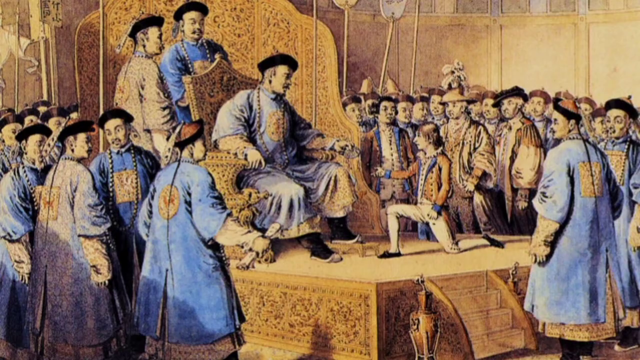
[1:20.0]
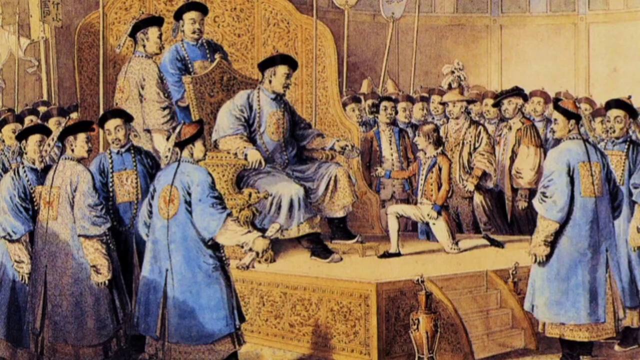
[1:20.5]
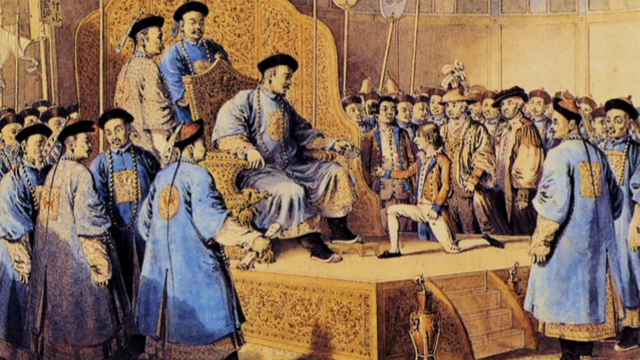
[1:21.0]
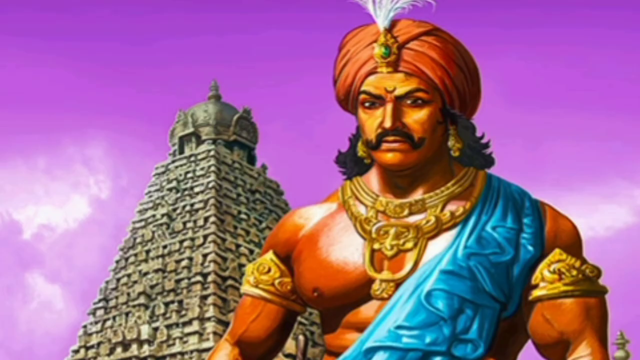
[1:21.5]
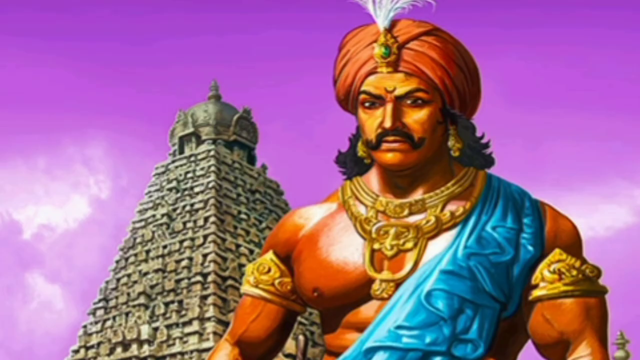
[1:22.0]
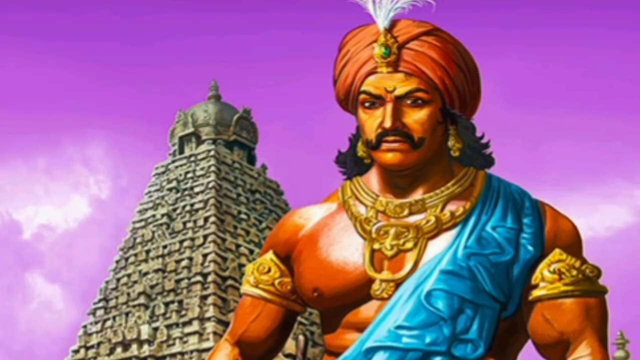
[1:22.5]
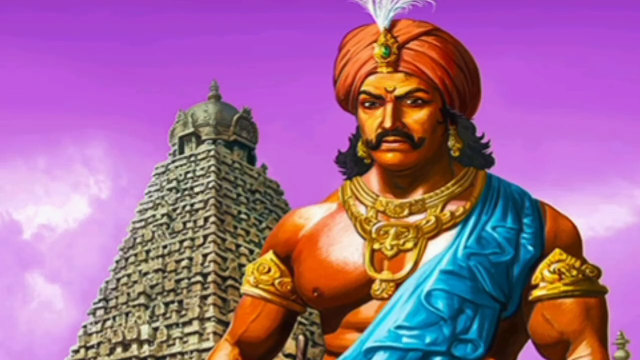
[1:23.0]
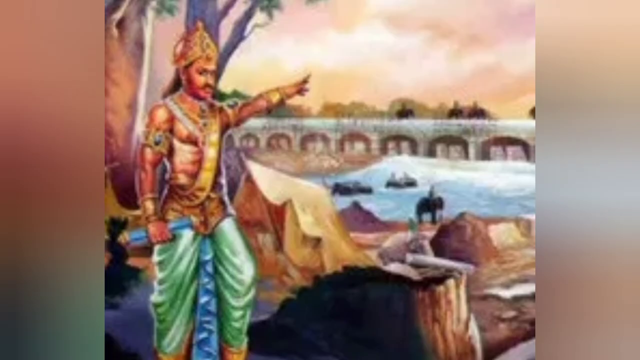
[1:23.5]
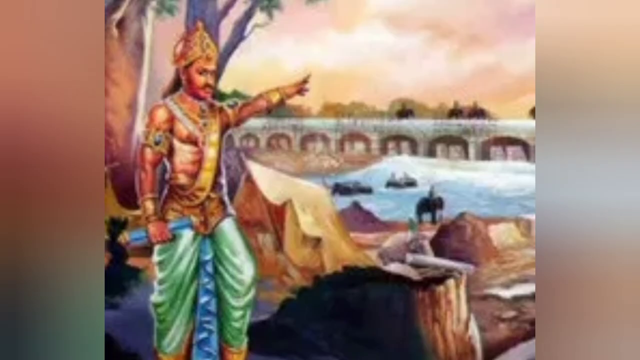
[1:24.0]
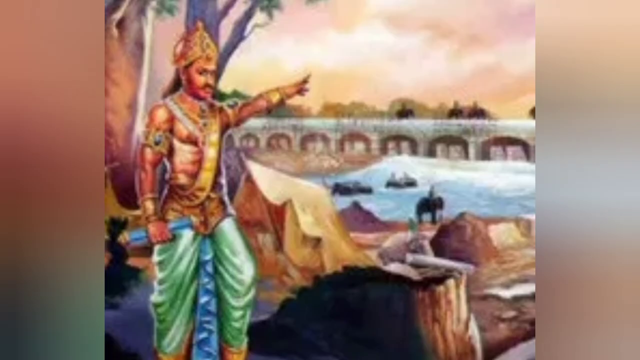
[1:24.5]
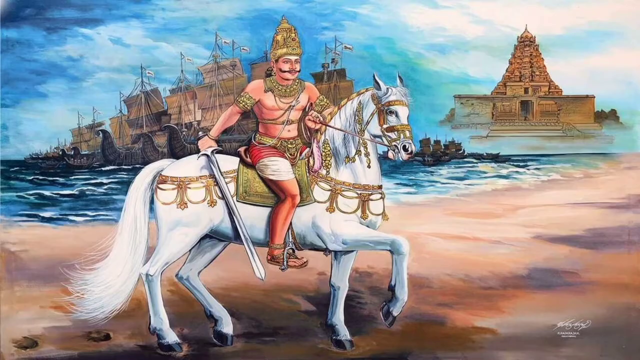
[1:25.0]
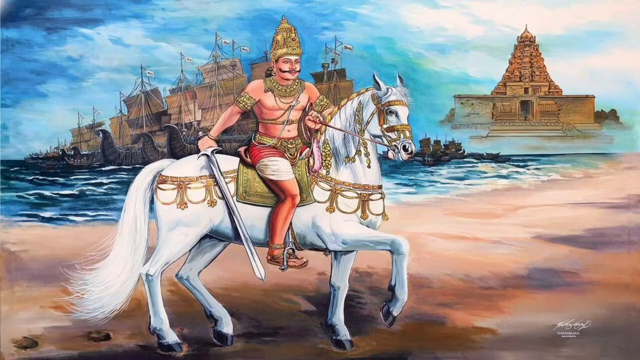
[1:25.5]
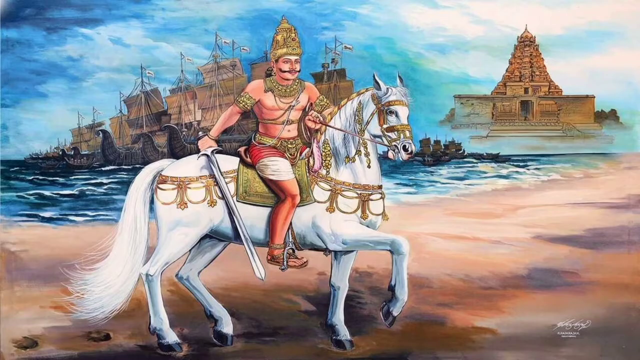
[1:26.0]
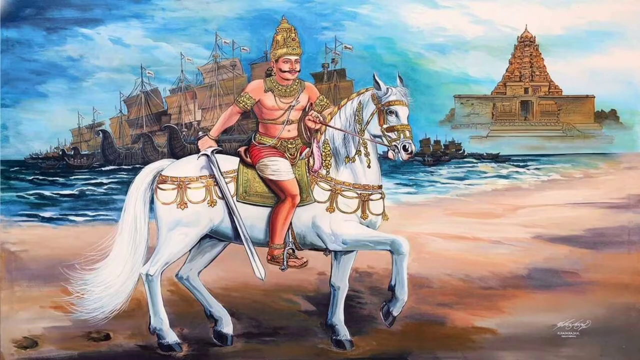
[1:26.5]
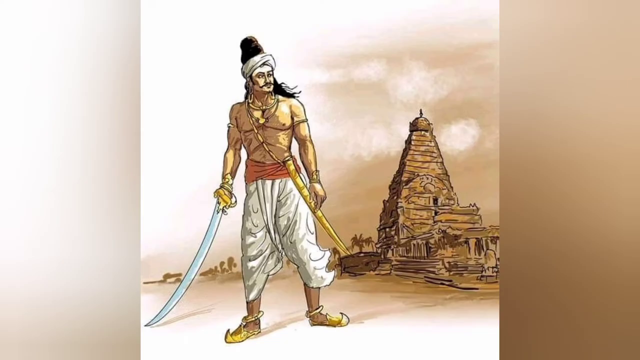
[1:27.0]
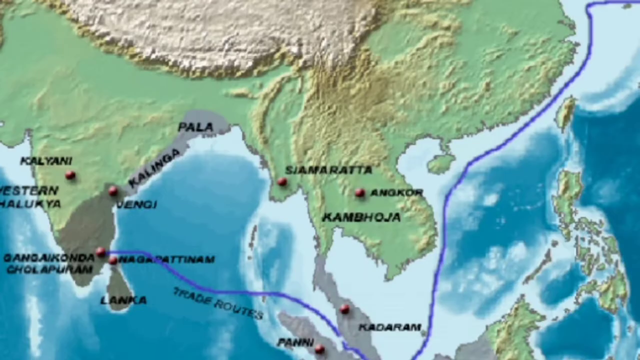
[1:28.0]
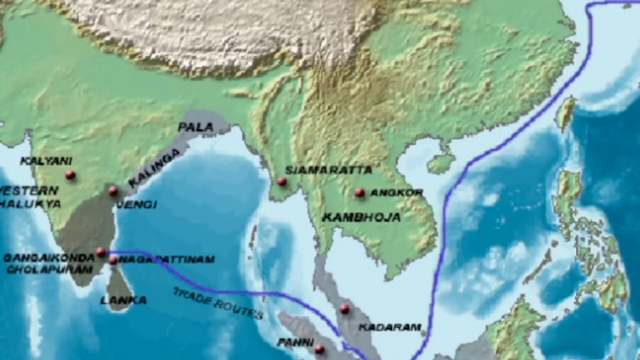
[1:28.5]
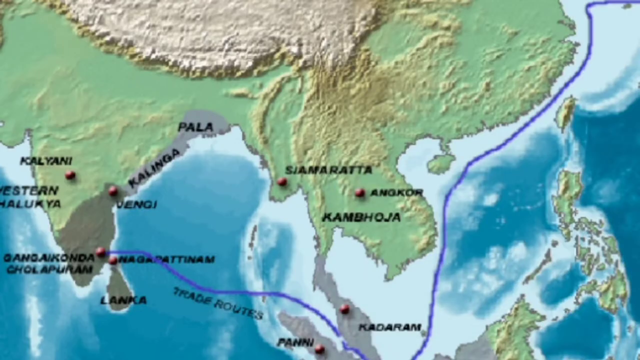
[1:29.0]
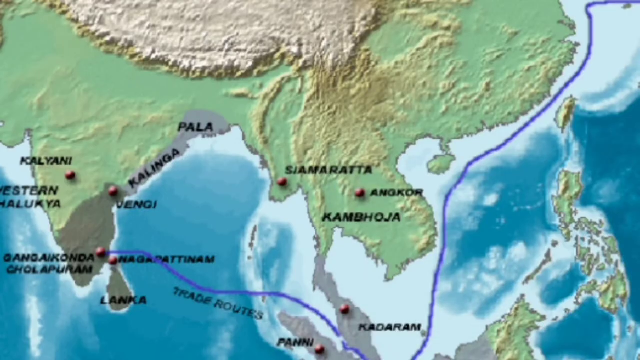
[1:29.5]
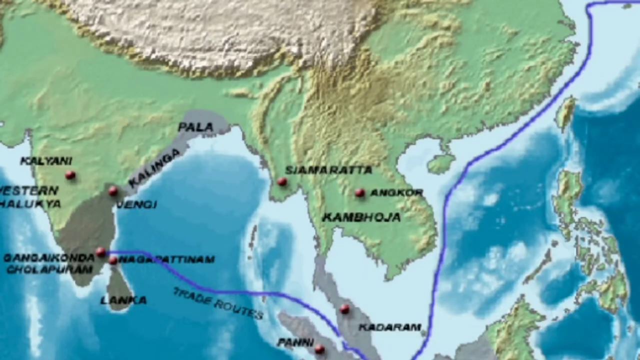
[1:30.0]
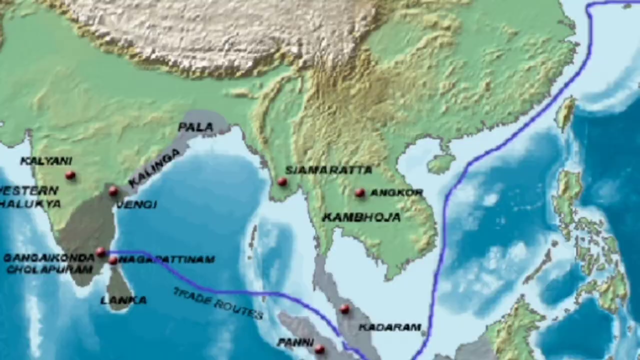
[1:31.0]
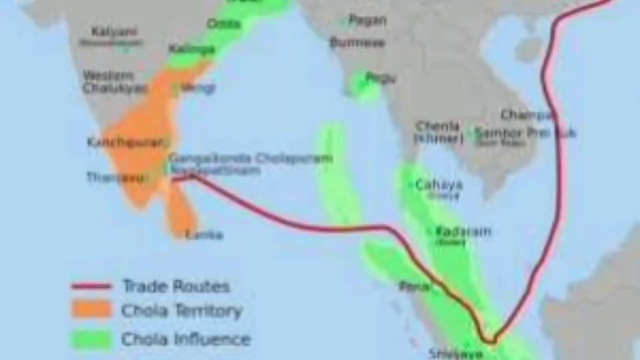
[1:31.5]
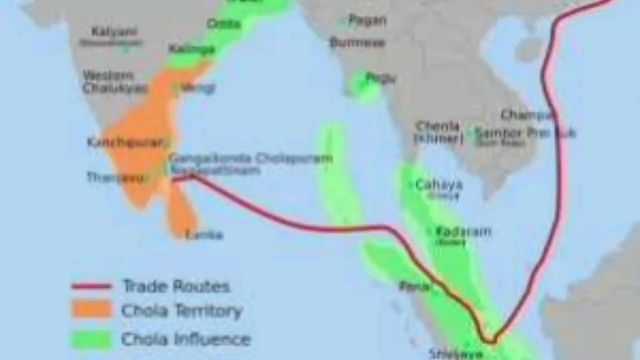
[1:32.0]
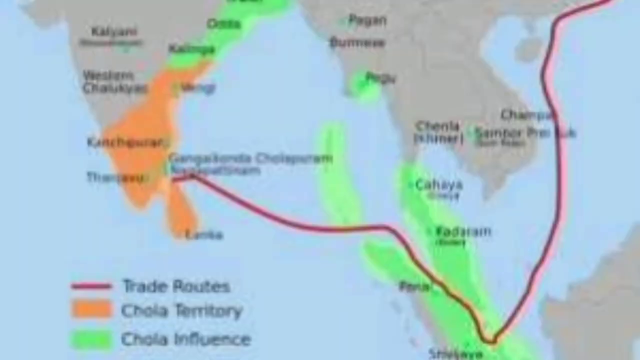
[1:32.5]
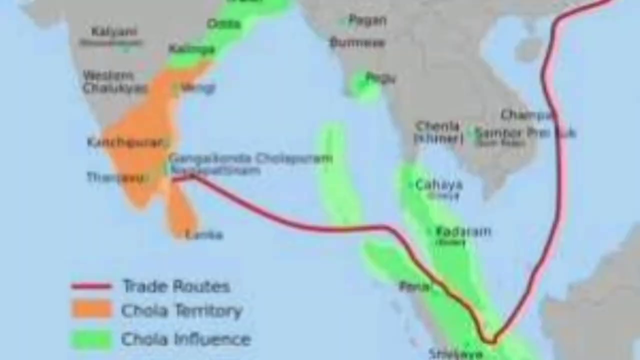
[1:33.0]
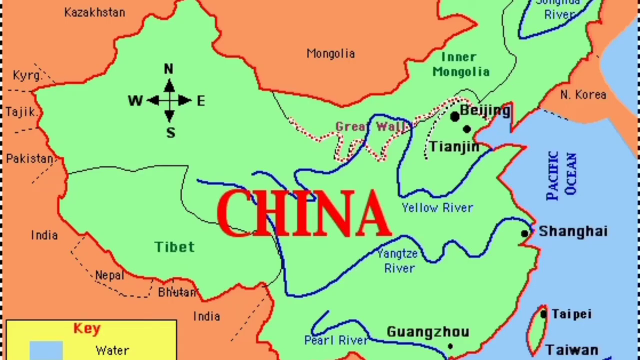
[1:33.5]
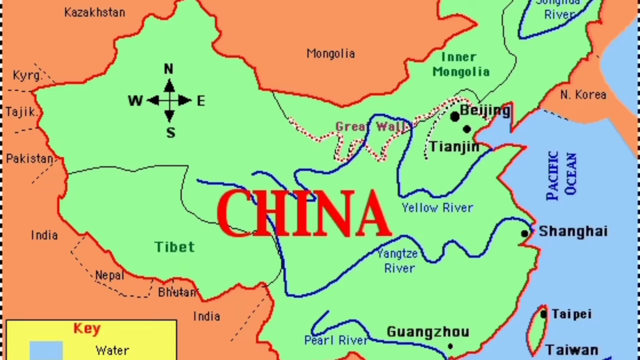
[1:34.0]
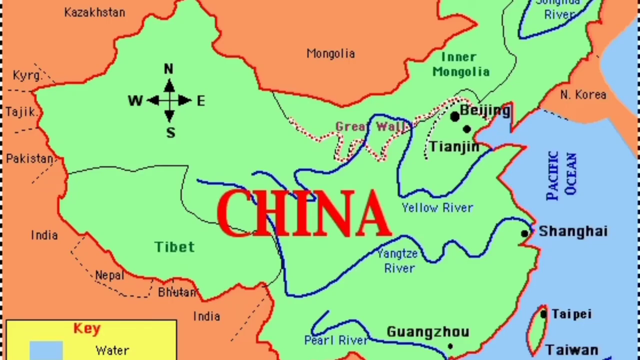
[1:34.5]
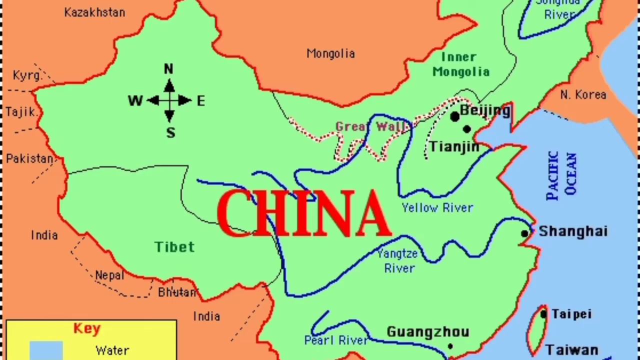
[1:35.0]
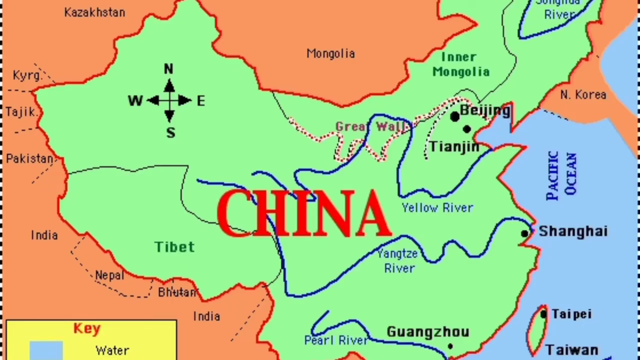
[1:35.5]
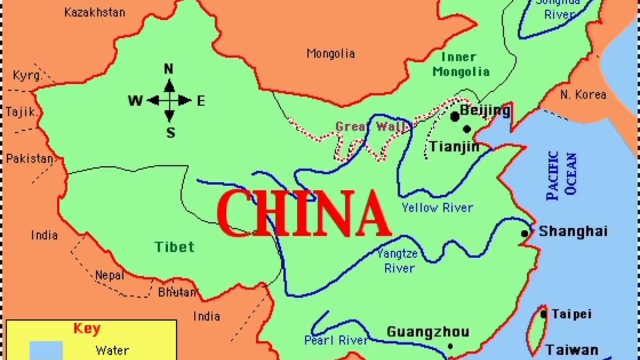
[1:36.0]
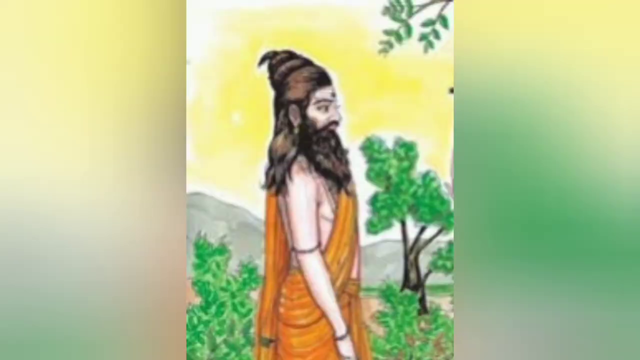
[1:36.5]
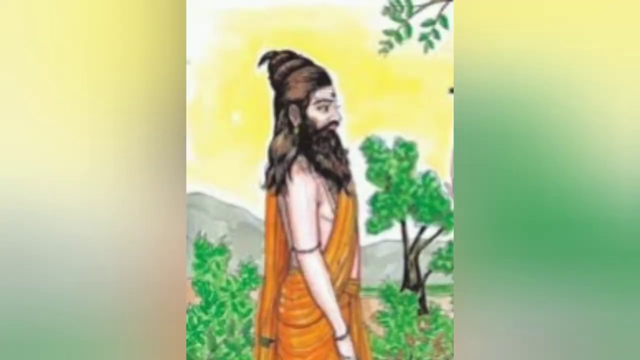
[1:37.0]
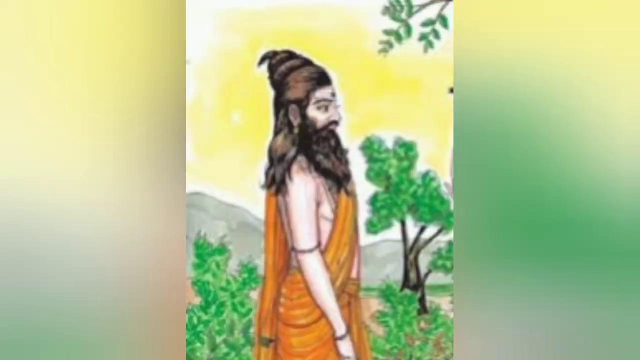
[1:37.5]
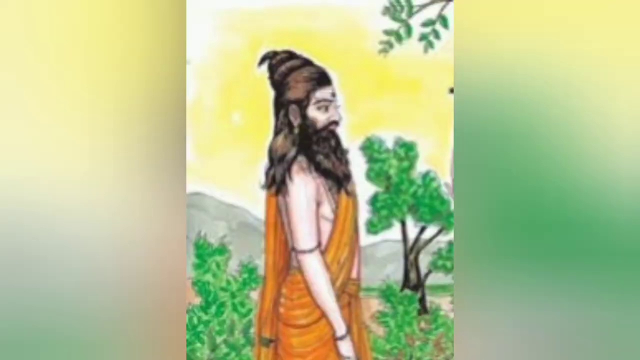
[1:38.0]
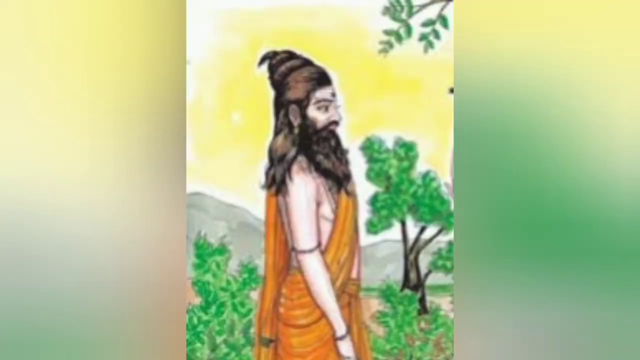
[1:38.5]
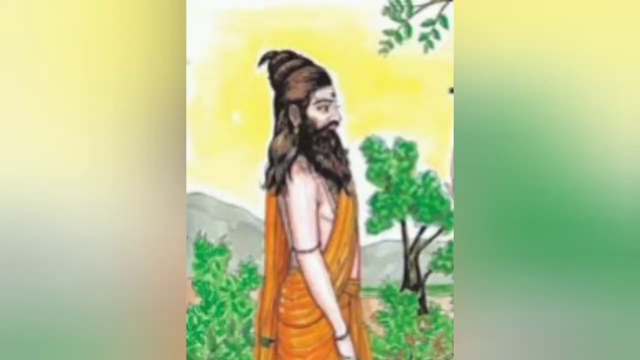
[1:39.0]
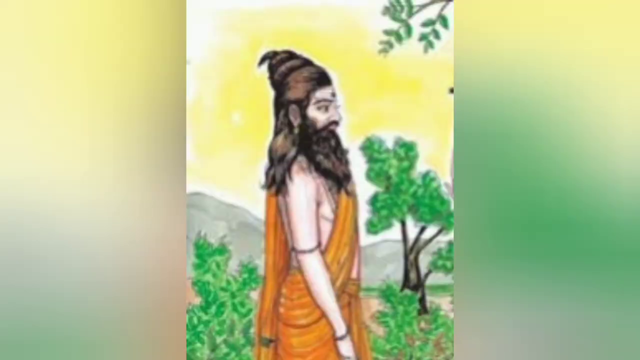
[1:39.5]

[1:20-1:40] An Indian prince who is very muscular rides a white stallion, carrying a big sword. A series of maps follows. The Indian priest in his orange robes appears again, and then the Chinese emperor is shown in his court, surrounded by courtiers wearing silk robes and traditional Chinese hats, with the Chinese pigtail. Europeans are also in the image, wearing 18th-century European clothes with white breeches; some wear tricorn hats and red coats, so they might be English. One of them kneels in front of the emperor, apparently as a sign of respect. The video returns to the muscular Indian prince and also shows temples and ships associated with him. Maps of trade between southern India and China show a sea route, and the same map of China appears showing a bit more of northern India, the Pacific Ocean and Korea.